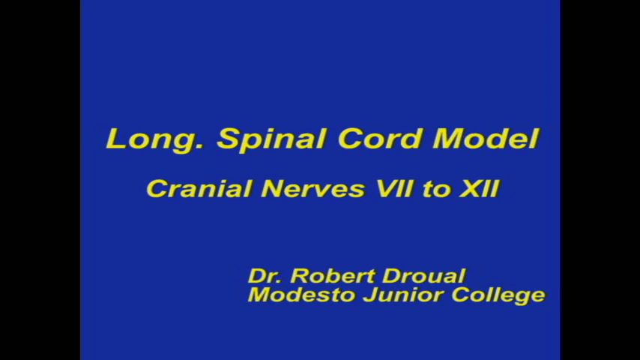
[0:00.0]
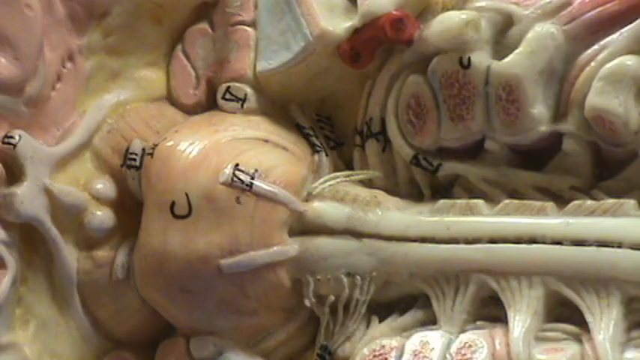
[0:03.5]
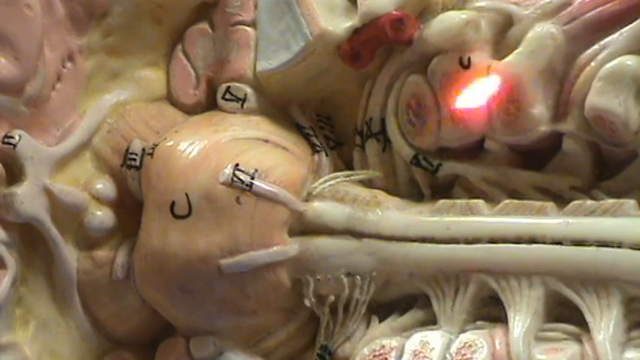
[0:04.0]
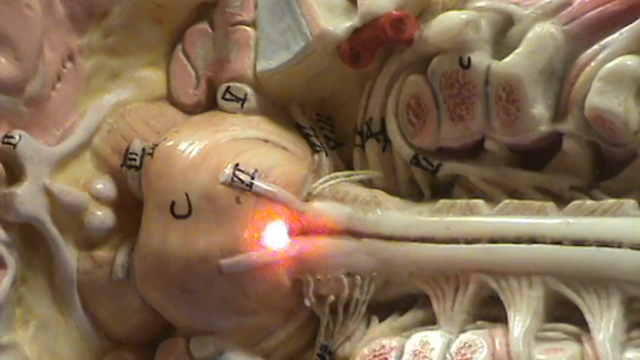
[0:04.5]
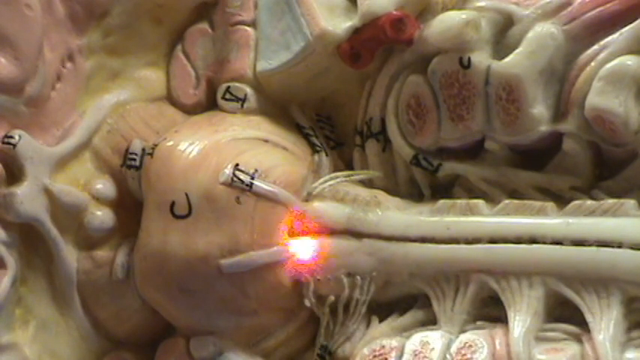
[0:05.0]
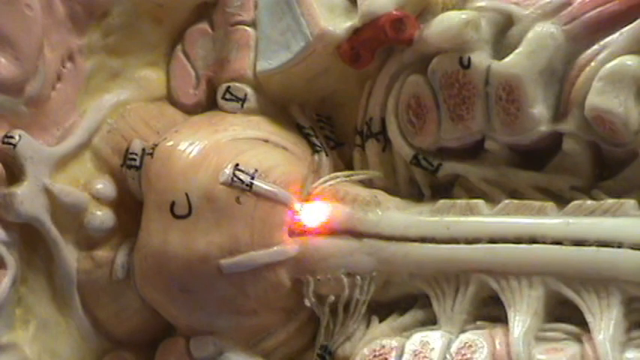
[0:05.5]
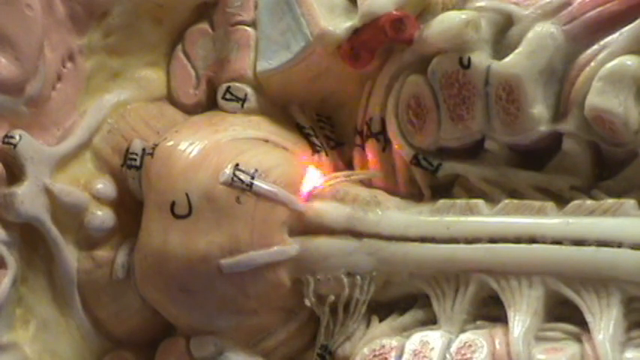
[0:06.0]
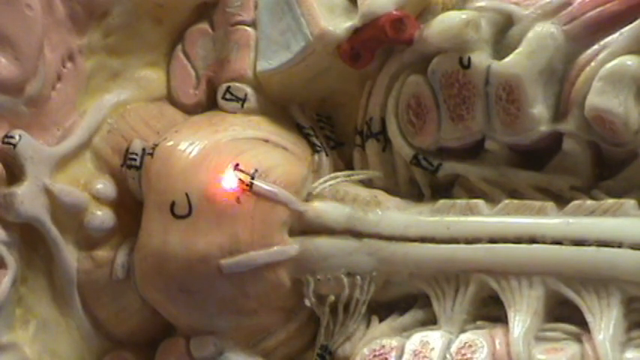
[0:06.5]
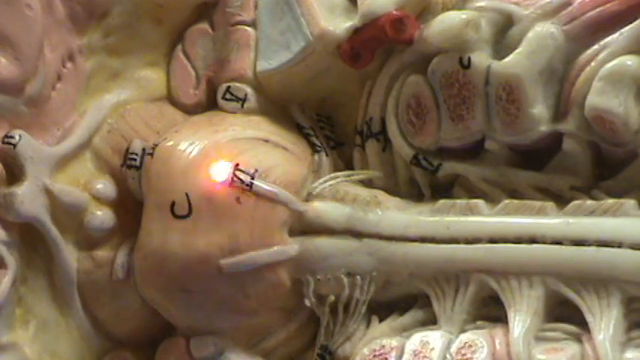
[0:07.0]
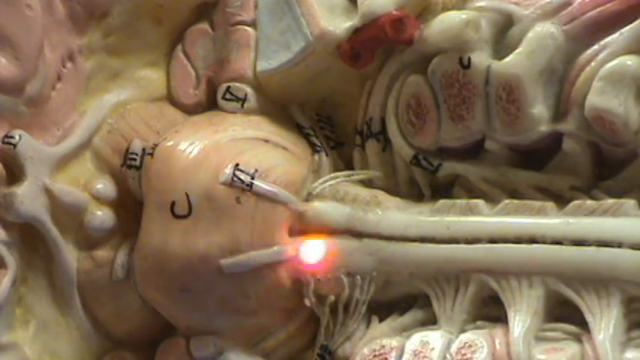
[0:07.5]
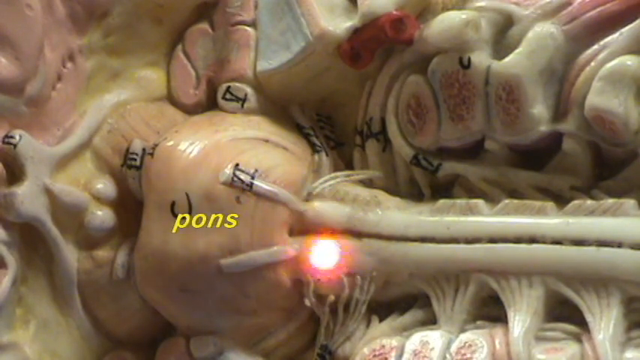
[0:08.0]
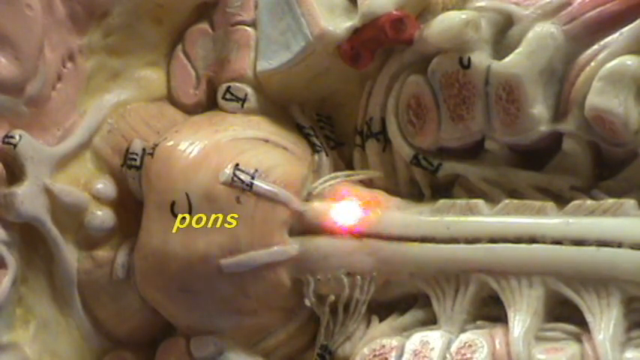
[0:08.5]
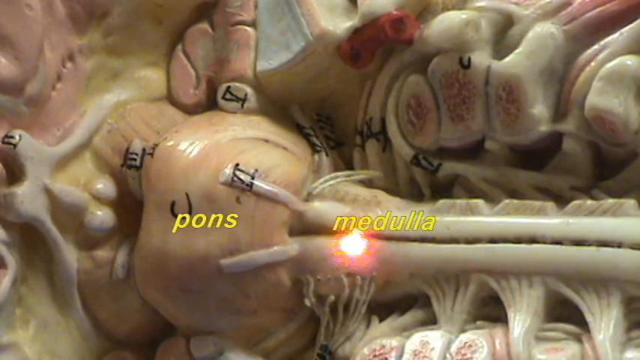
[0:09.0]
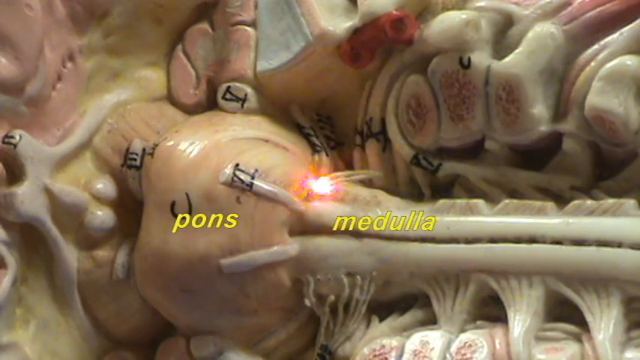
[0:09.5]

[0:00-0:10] The video concerns a medical procedure. A long title at the bottom reads "Spinal cord model, cranial nerves, VII to XII, Dr. Robert Droual, Modesto Junior College." The video then shows some type of medical procedure, which appears to focus on the area where the spinal cord meets the brain. Two areas highlighted on the screen are the pons and the medulla, apparently in the upper part of the spinal cord near the brain. A red light shines onto areas of the upper spinal cord and moves around in the image.